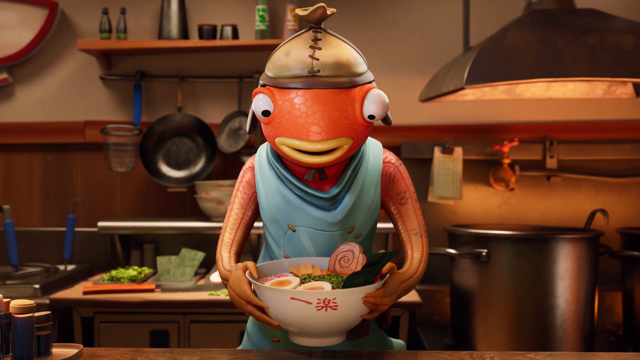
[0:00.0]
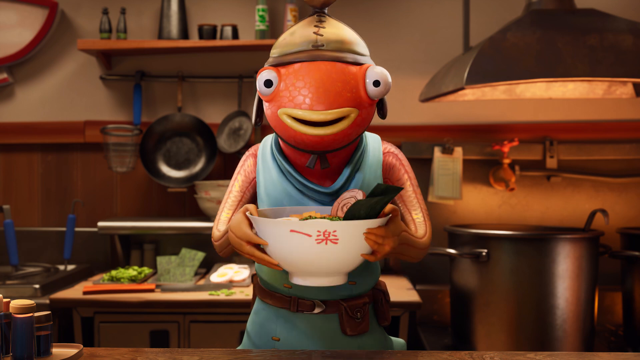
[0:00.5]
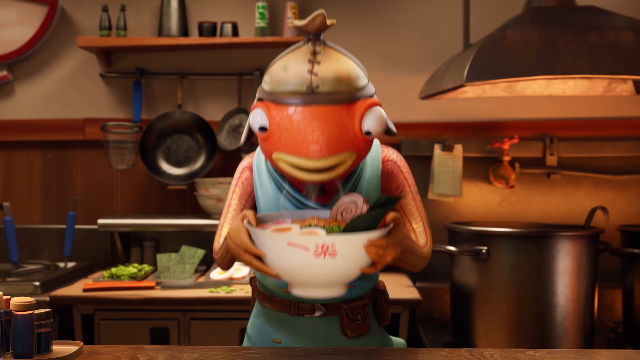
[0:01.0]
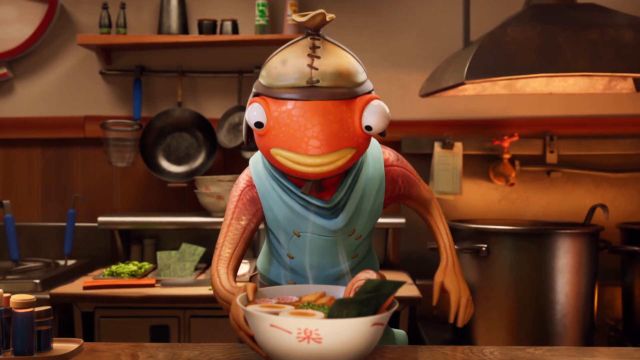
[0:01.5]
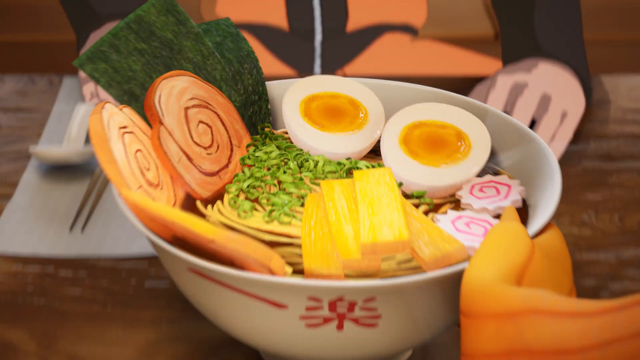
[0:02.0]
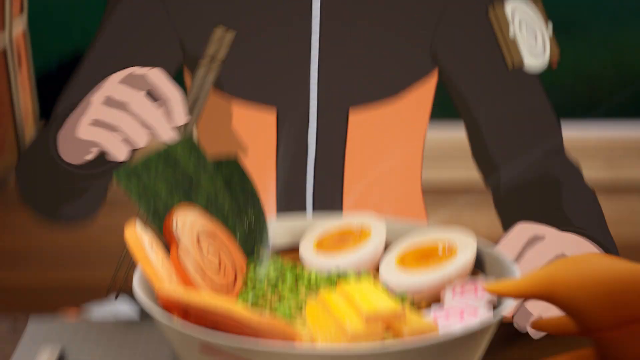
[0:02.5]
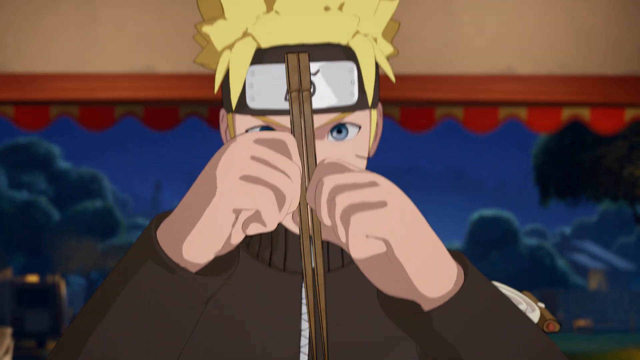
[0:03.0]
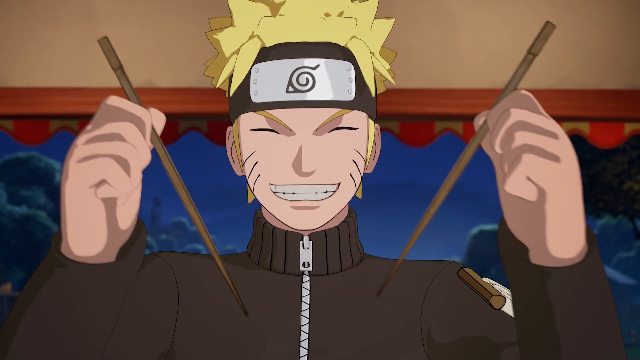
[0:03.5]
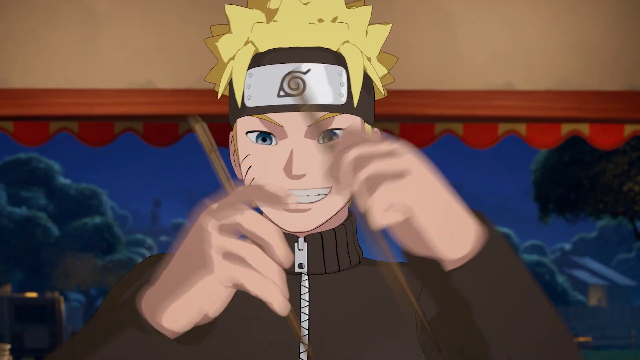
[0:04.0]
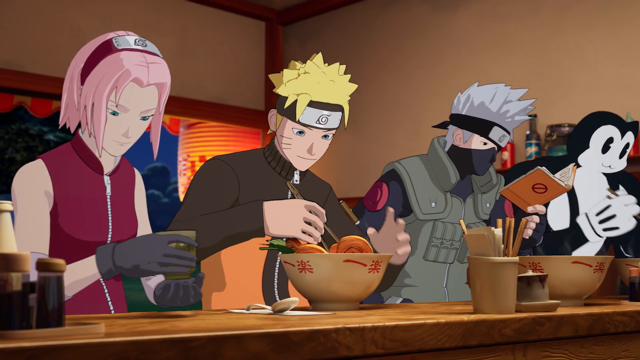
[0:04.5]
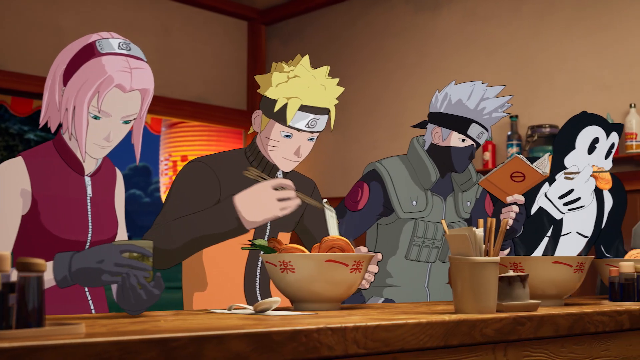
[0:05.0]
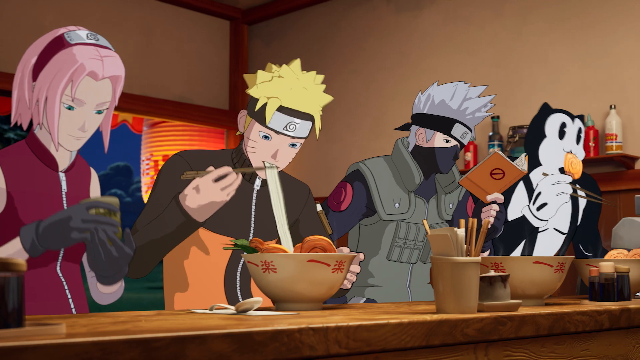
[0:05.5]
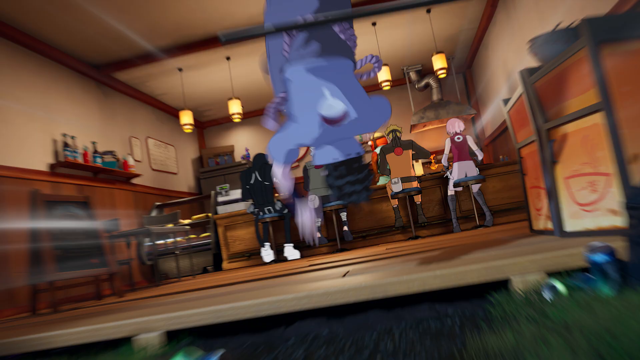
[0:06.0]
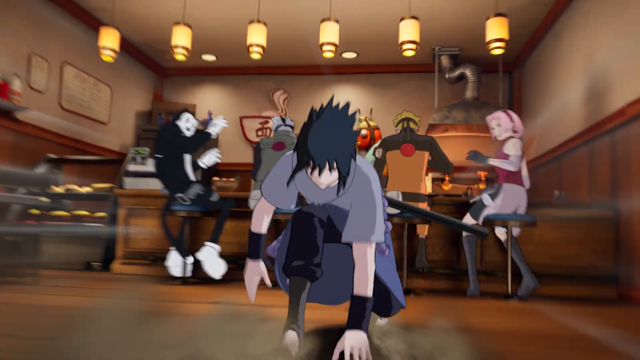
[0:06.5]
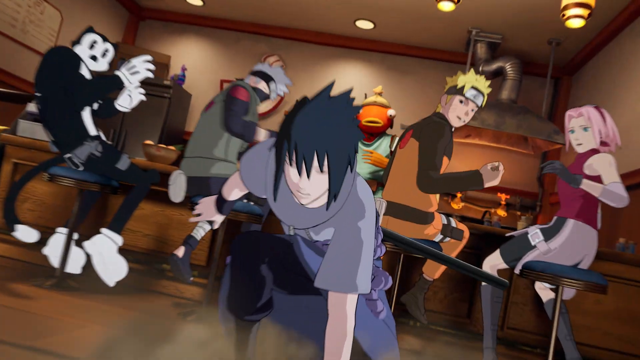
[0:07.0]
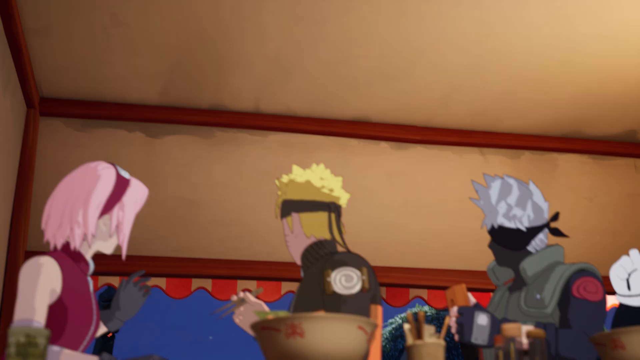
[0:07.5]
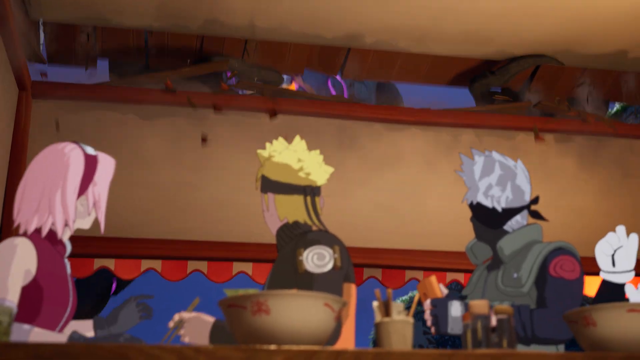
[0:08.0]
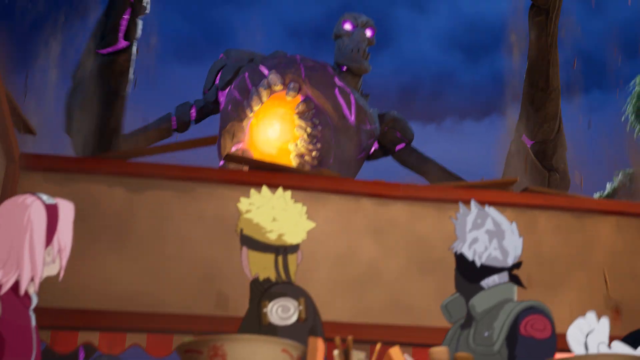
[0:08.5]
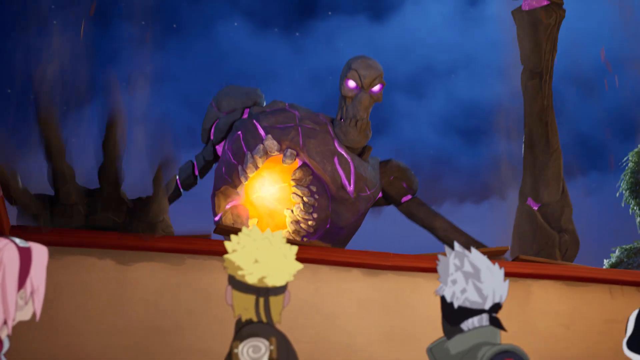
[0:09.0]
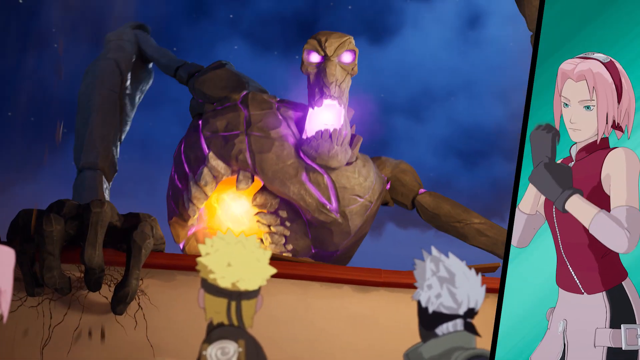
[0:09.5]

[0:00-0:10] An animated, fish-looking creature, kind of an anthropomorphic fish, is in a kitchen. He has a little hat on, orange skin, and opposable fingers and thumbs, and he holds a bowl of ramen. In the next shot he appears to pass the bowl across the table to an animated person wearing kind of an orange and black jumpsuit, a black headband with a silver logo on the front, and kind of blonde spiky hair. The shot then transitions to a few more characters eating at the same table: a man with gray hair in an olive green jumpsuit, dressed in the same way as the man in the orange and black jumpsuit, what appears to be a black and white cat, and a woman on the left with a pink haircut and a red shirt.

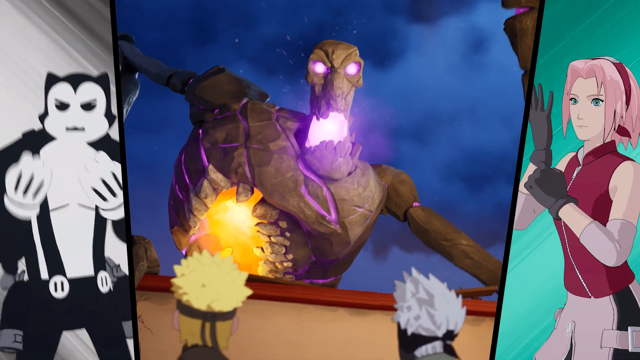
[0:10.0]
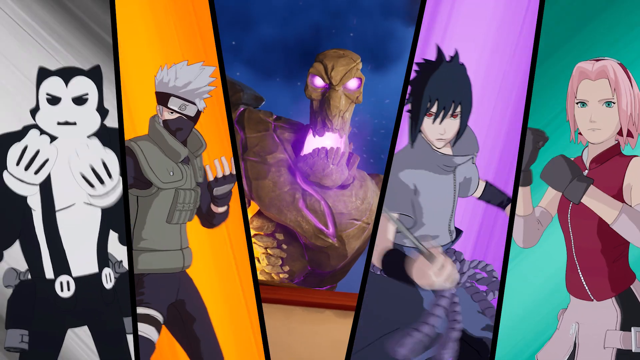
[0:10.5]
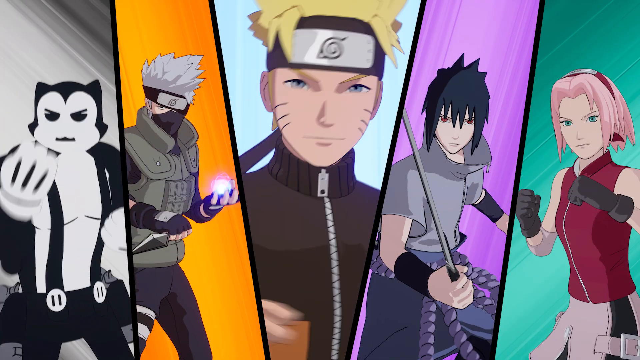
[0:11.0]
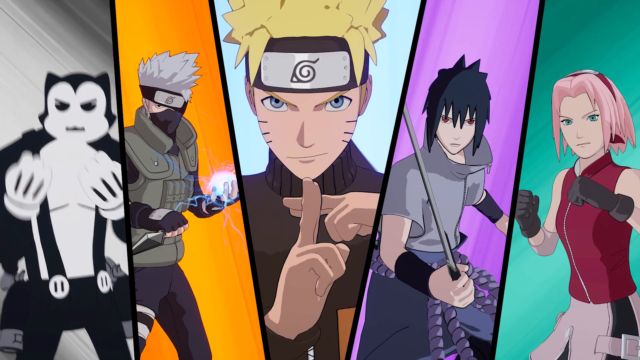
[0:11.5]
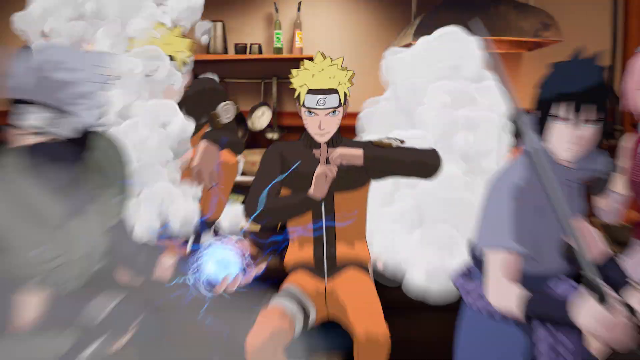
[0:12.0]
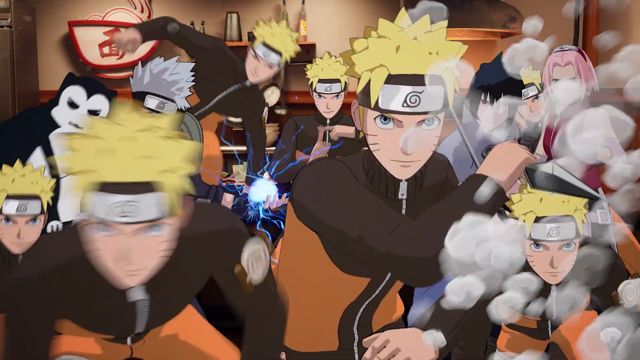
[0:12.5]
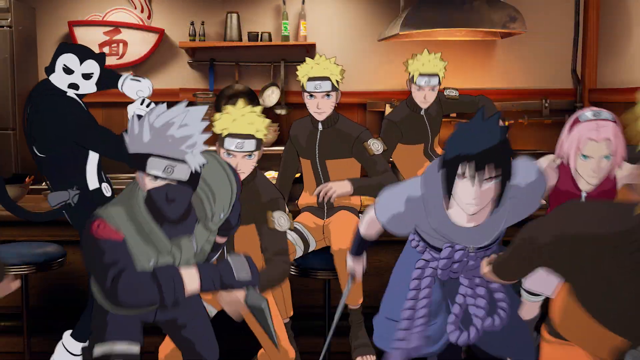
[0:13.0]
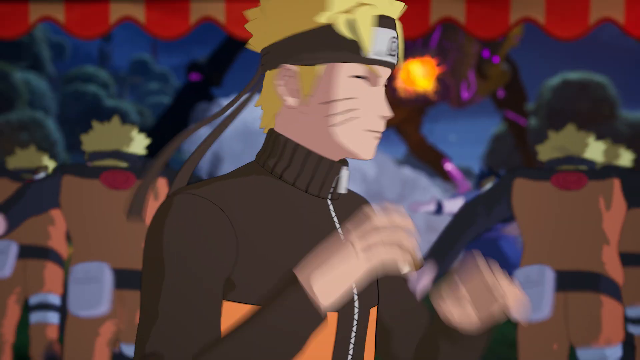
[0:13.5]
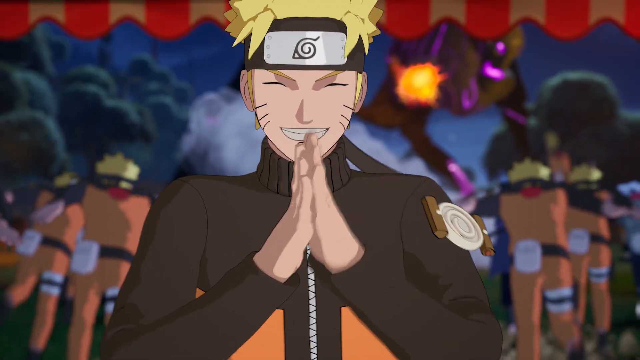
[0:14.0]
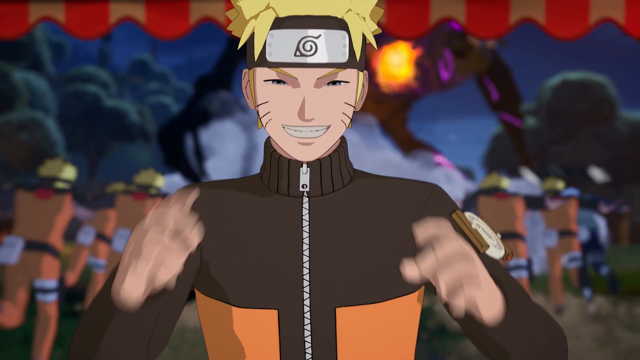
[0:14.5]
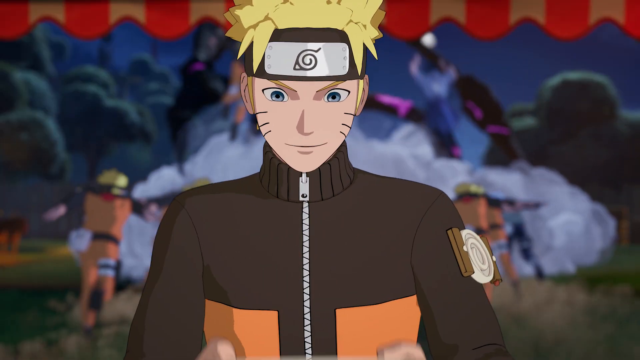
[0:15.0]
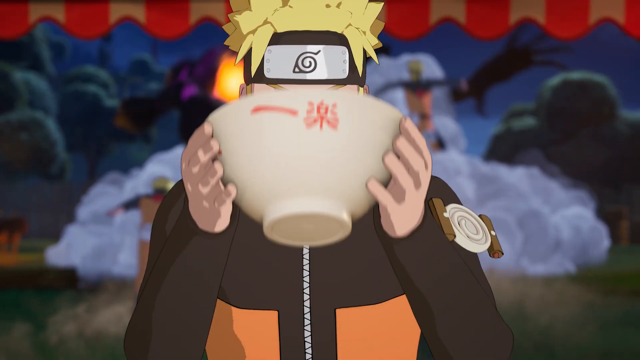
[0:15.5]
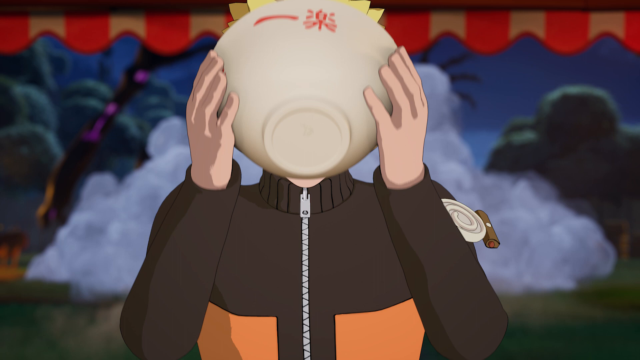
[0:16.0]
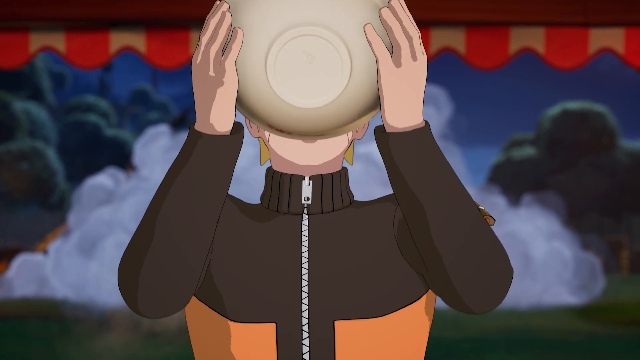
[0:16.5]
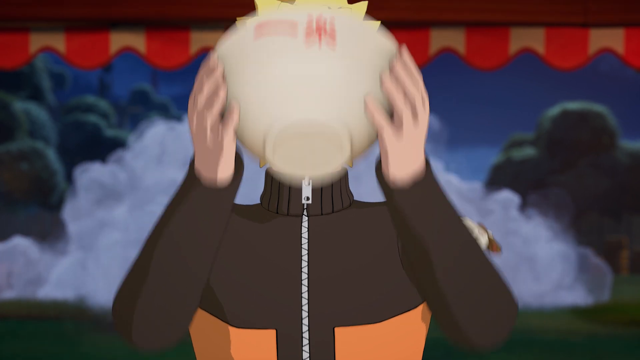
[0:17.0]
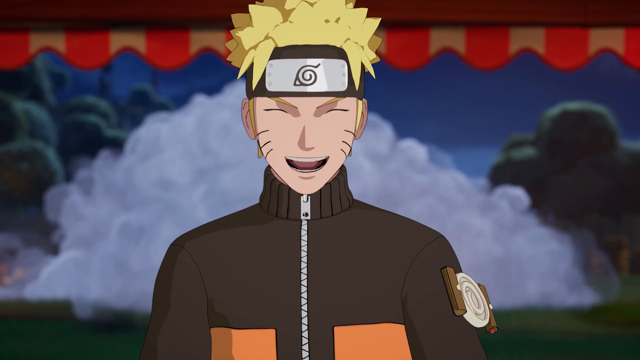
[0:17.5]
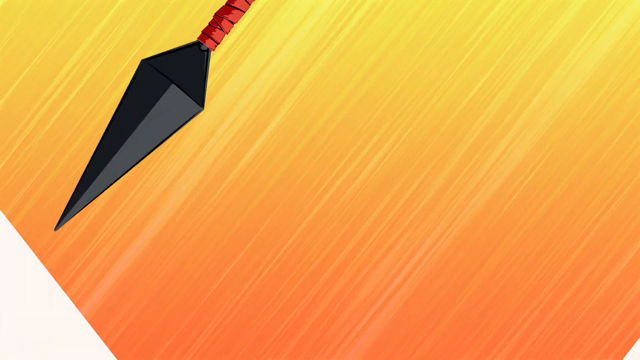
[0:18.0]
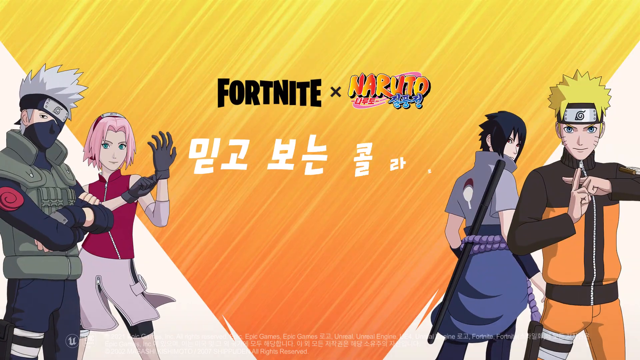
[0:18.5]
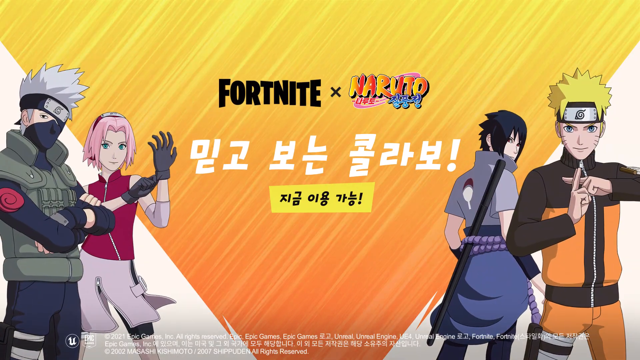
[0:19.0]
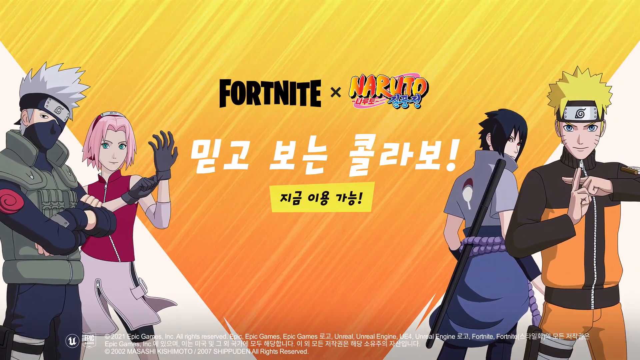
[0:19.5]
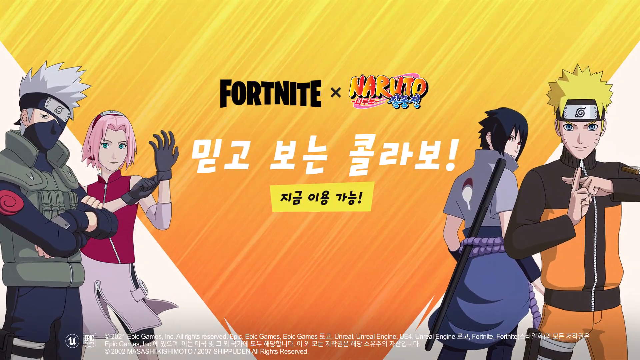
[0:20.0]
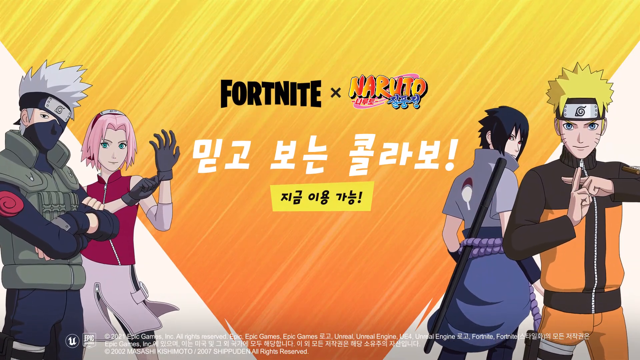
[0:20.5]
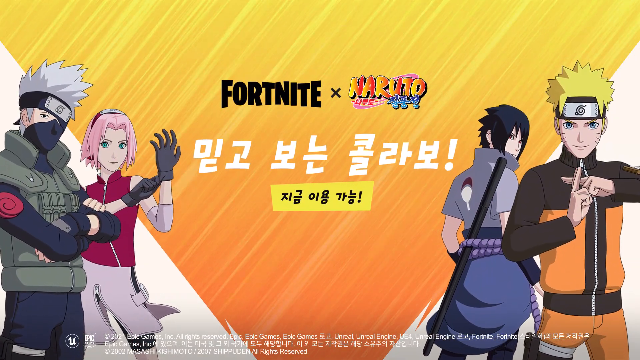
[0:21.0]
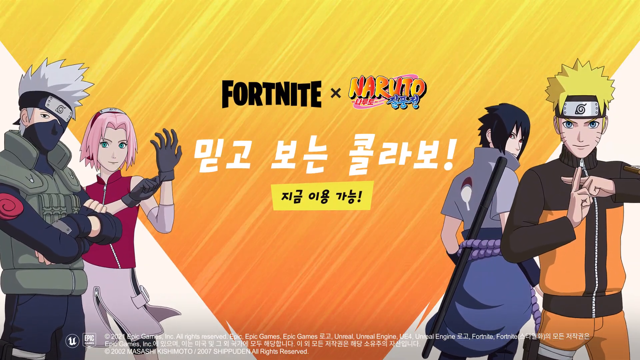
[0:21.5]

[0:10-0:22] The characters who were sitting at the table are kind of overlaid in a divided diagonal strip, each apparently performing their signature pose, with a different color background behind each of them. The man in the orange and black jumpsuit rubs his hands together as if satisfied, then goes back to his bowl of ramen, picking it up and drinking from it. The scene then shifts to what looks like a graphic that reads "Fortnite X Naruto".